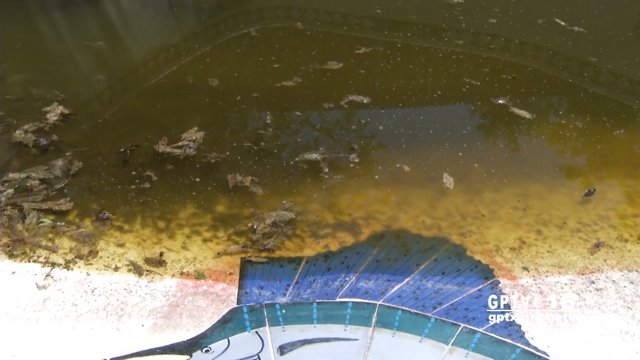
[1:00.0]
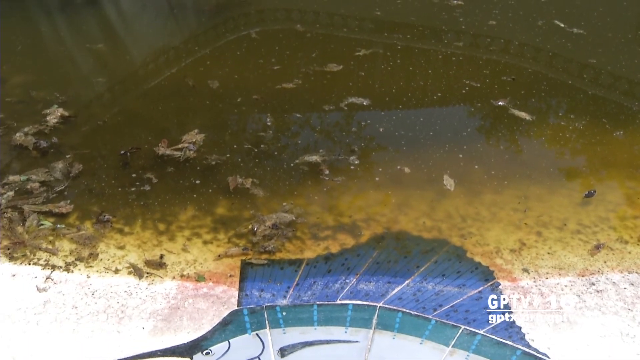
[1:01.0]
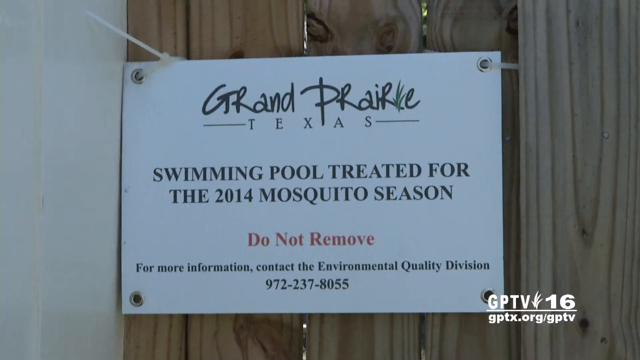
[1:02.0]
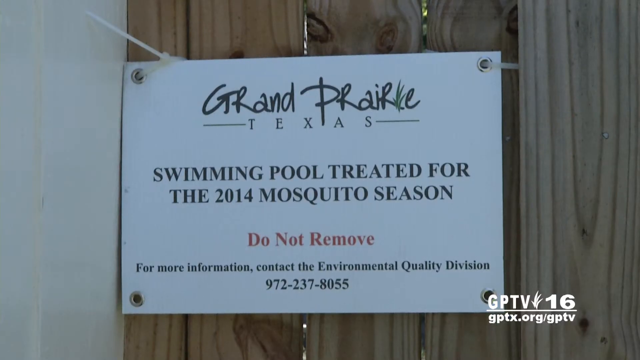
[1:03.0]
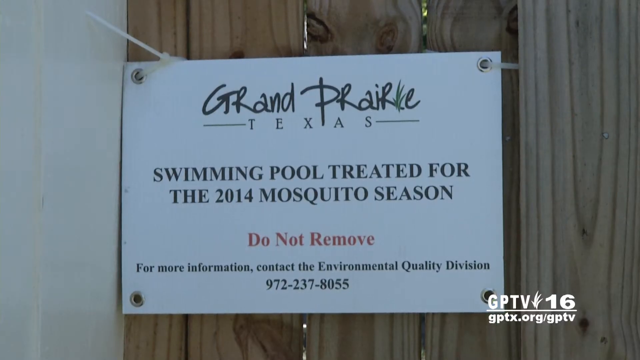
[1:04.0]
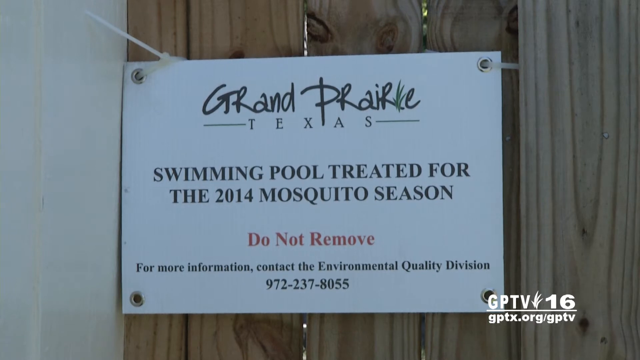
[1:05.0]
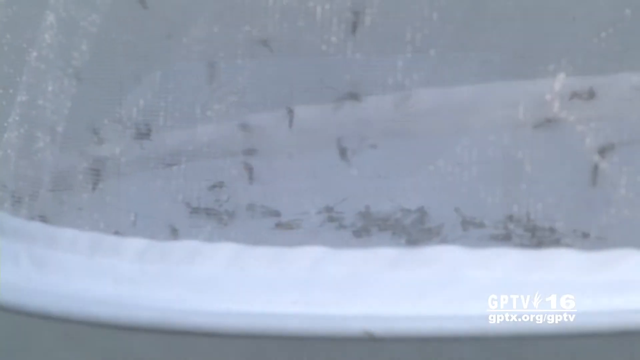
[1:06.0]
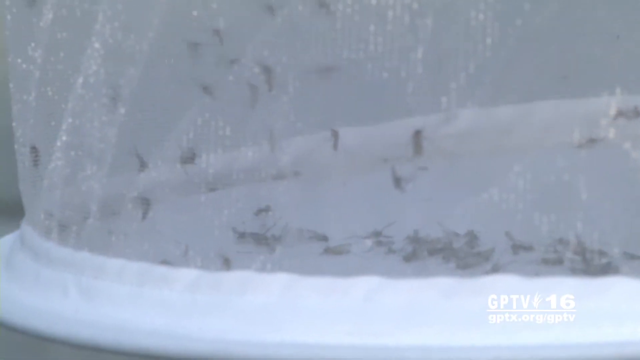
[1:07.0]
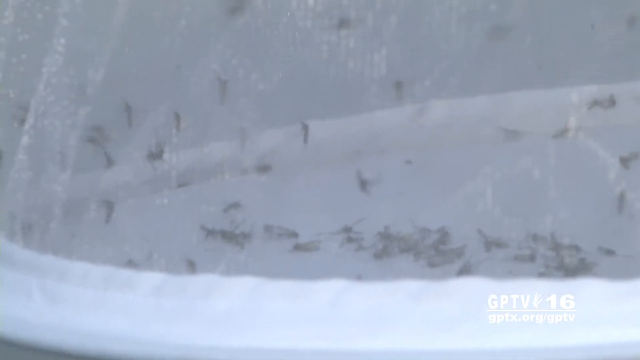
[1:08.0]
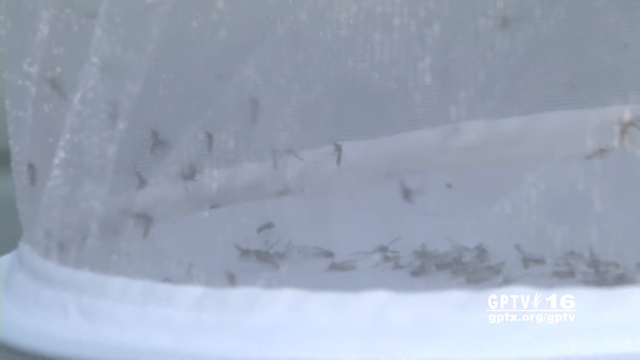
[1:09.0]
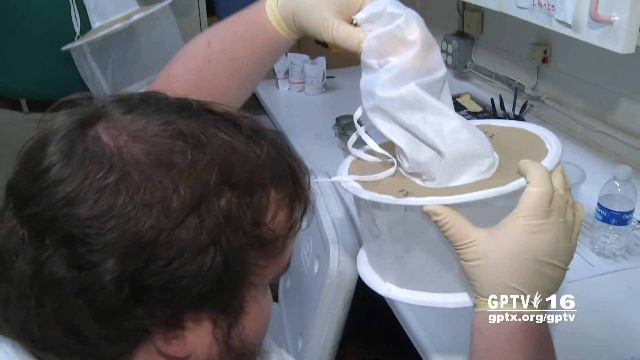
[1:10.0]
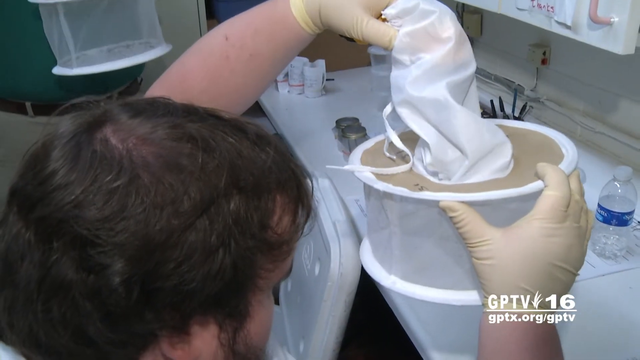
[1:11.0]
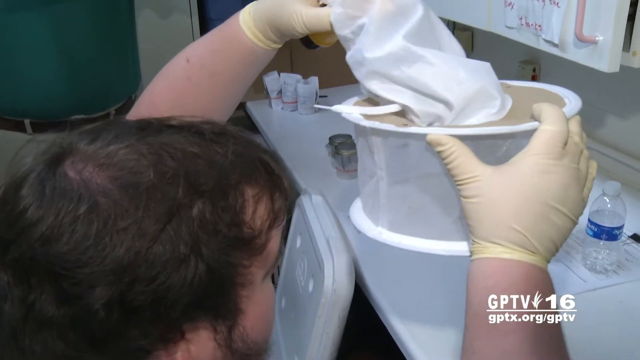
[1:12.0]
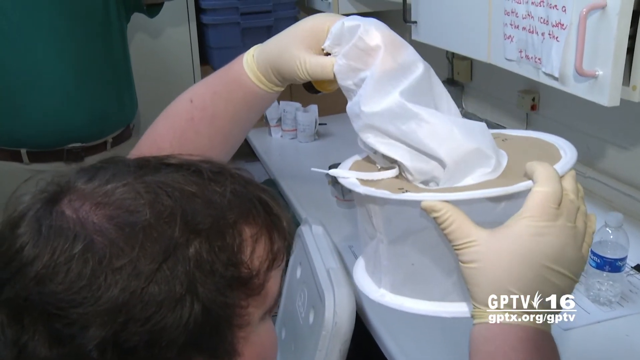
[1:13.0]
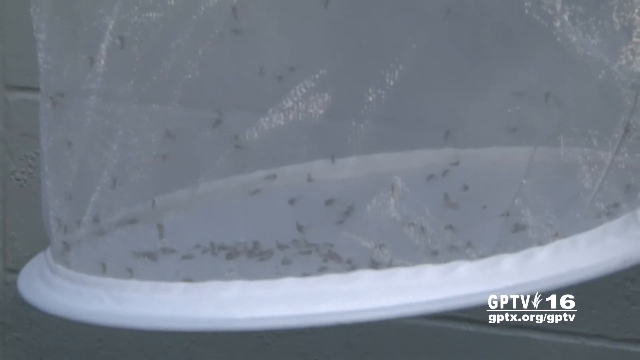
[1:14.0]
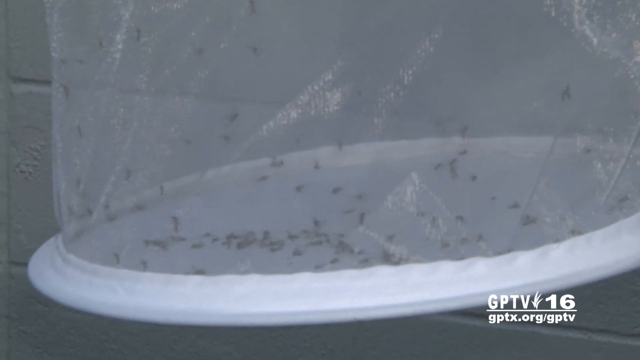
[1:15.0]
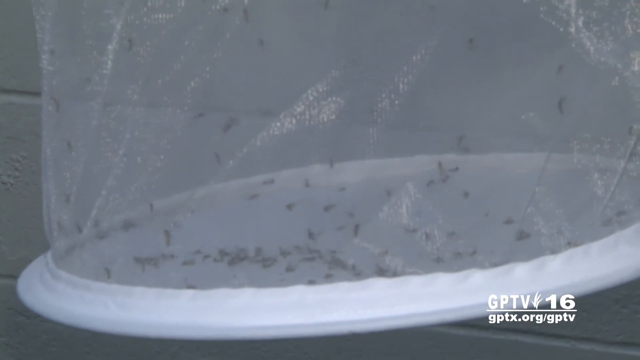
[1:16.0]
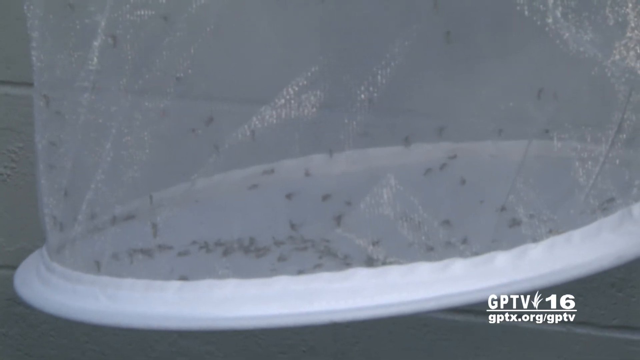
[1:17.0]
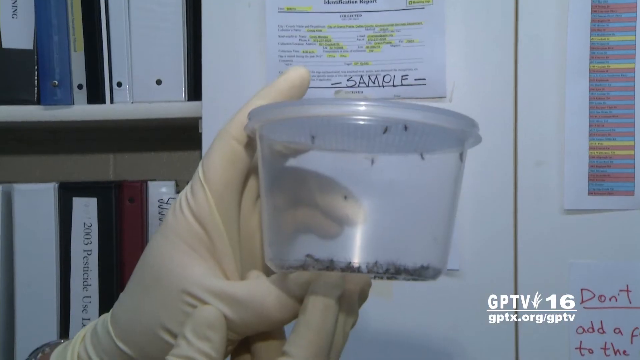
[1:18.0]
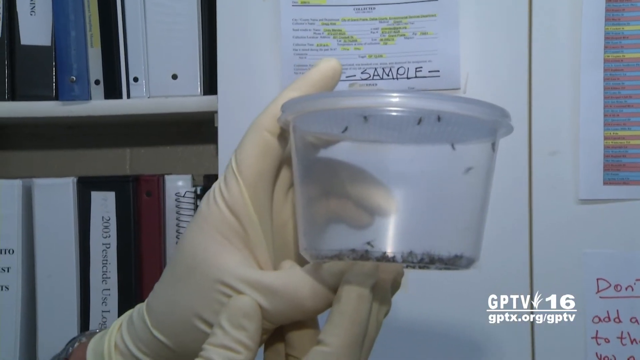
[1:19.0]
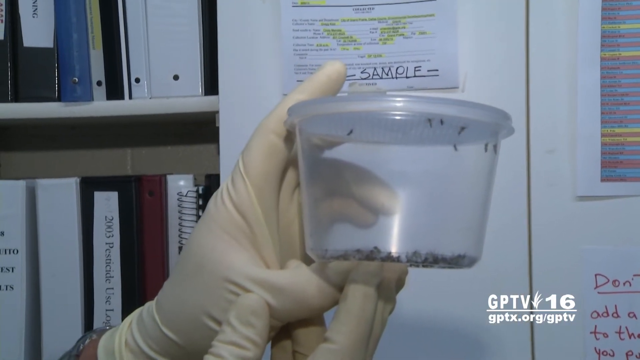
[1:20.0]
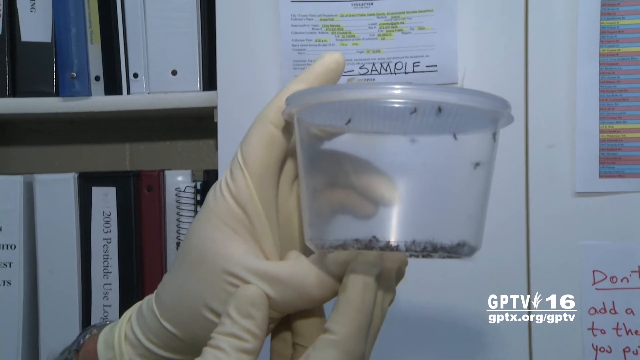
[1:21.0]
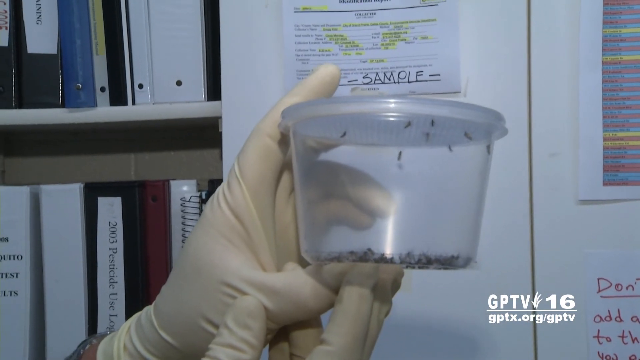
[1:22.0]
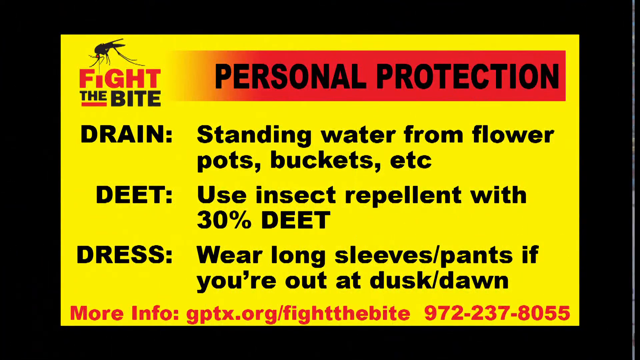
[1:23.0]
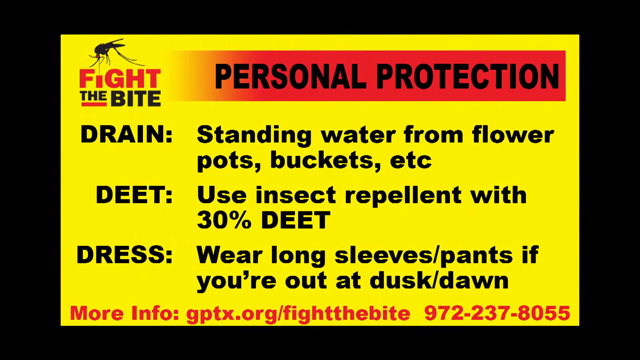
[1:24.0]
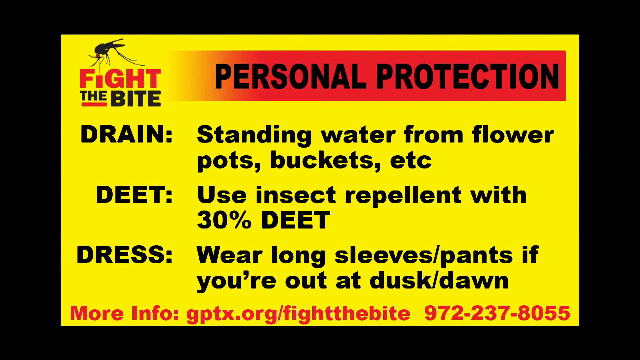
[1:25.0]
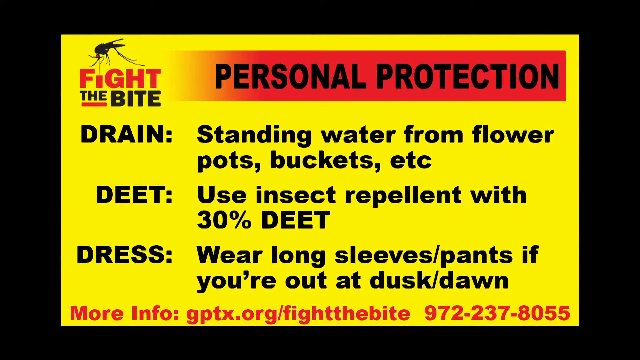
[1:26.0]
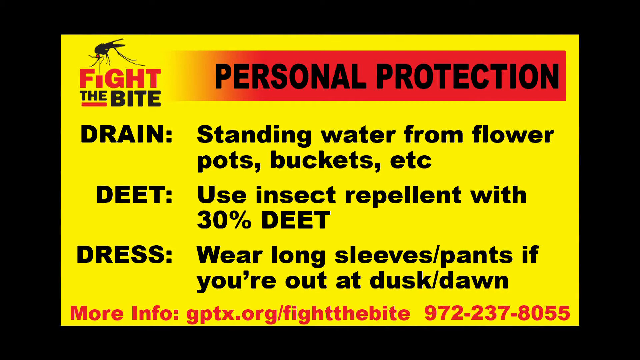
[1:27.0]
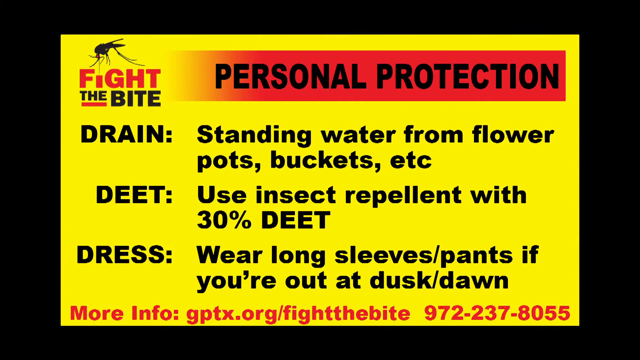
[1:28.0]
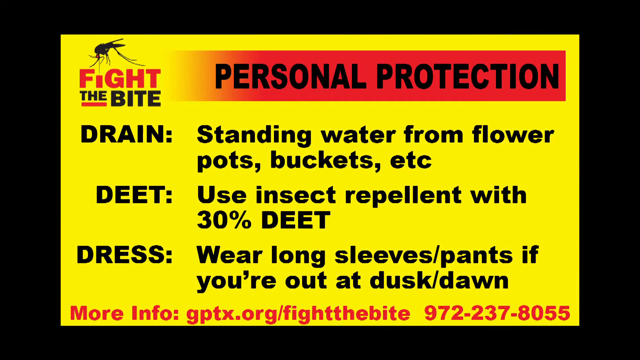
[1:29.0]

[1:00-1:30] The bottom of a swimming pool is shown, mostly drained except for a fine layer of water that is green, thick and sludge-like, with multiple pieces of detritus in it. The video cuts to a fence where a sign is attached through various grommet holes with zip ties to the fence planks. The white, rectangular sign reads "Grand Prairie, Texas. Swimming pool treated for the 2014 mosquito season. Do not remove. For more information, contact the Environmental Quality Division. 972-237-8055". Next comes a shot of a white, fine mesh net with multiple mosquitoes inside attempting to fly out. The camera zooms out to show the net in a lab setting, where a man holds the net and adjusts it above a white workbench. The camera then cuts to another close-up of the net.